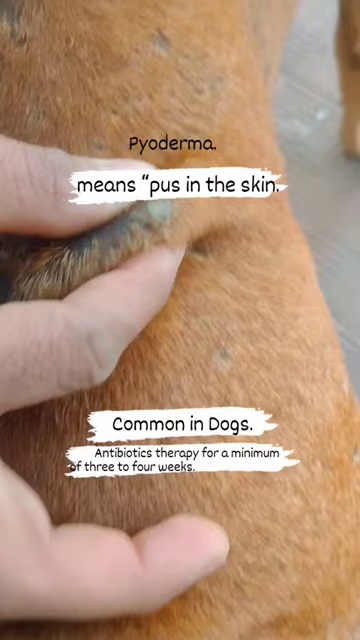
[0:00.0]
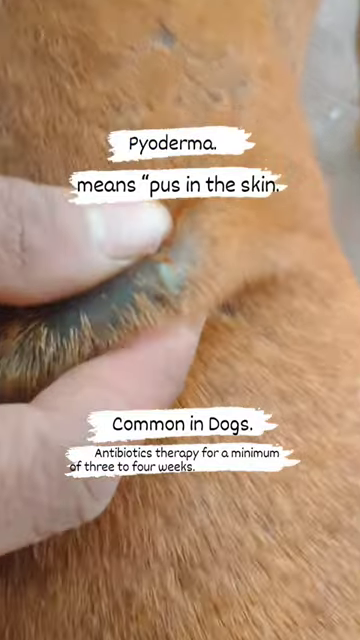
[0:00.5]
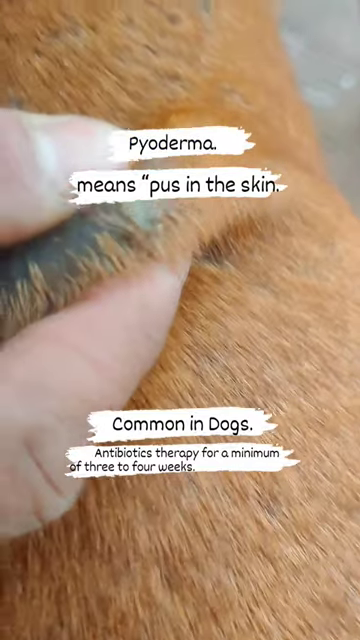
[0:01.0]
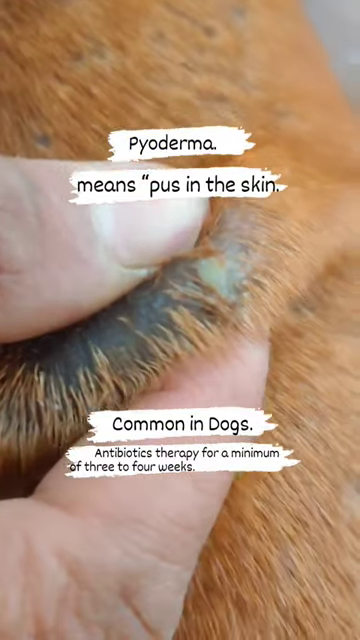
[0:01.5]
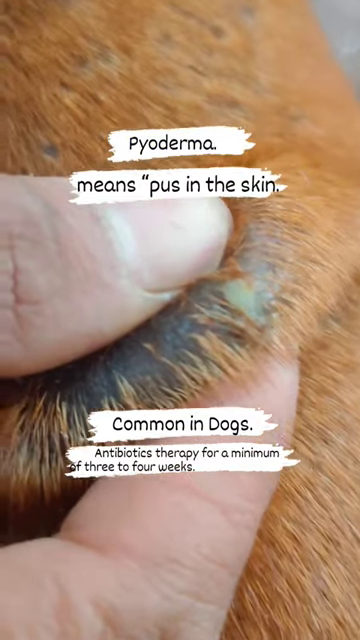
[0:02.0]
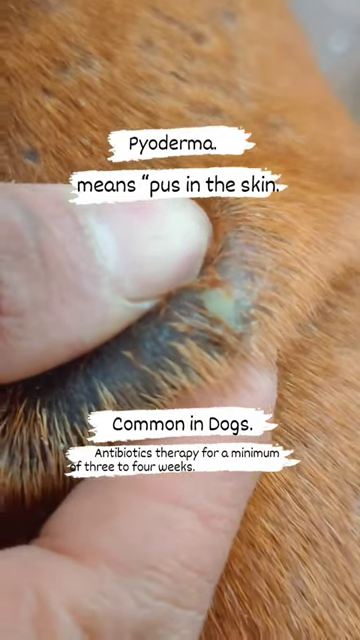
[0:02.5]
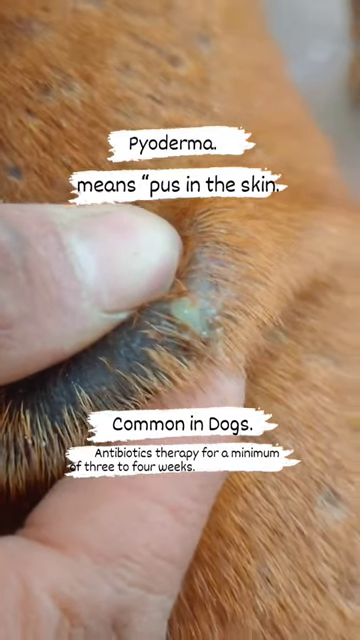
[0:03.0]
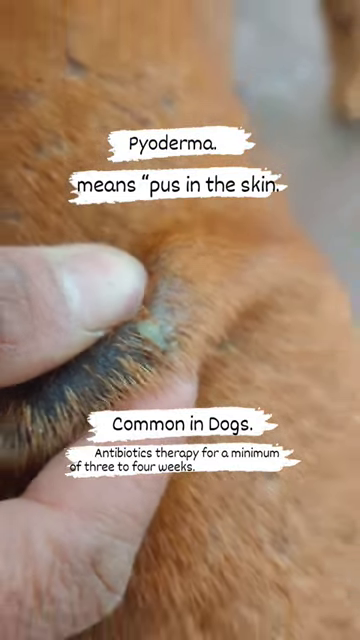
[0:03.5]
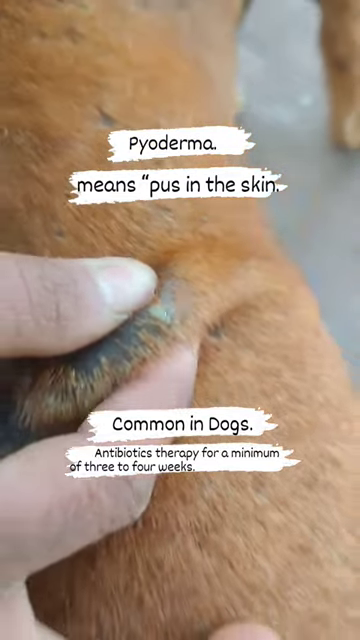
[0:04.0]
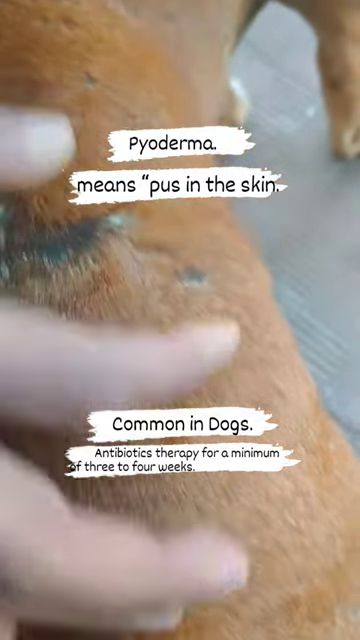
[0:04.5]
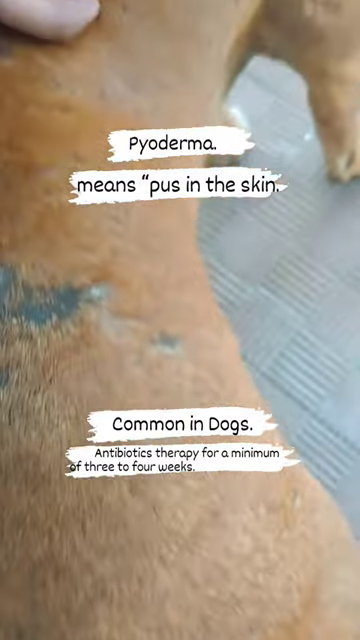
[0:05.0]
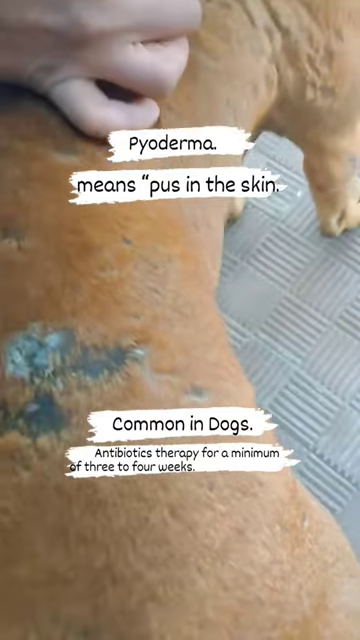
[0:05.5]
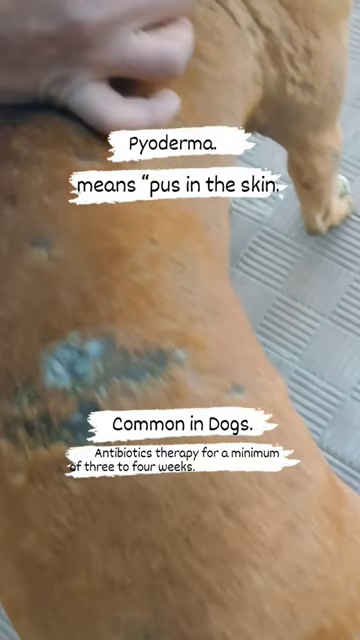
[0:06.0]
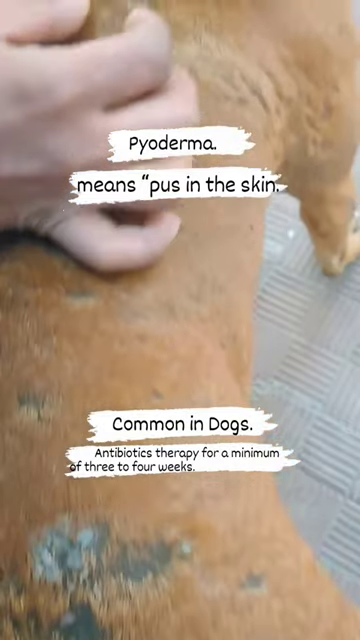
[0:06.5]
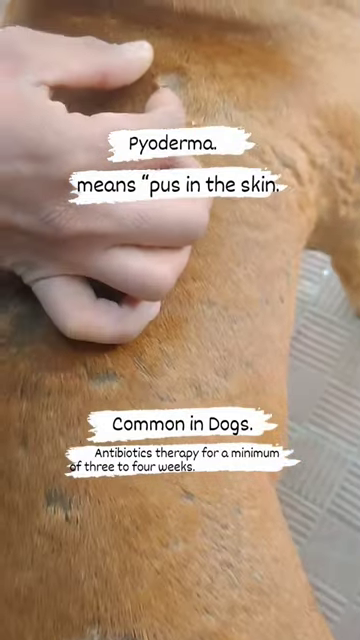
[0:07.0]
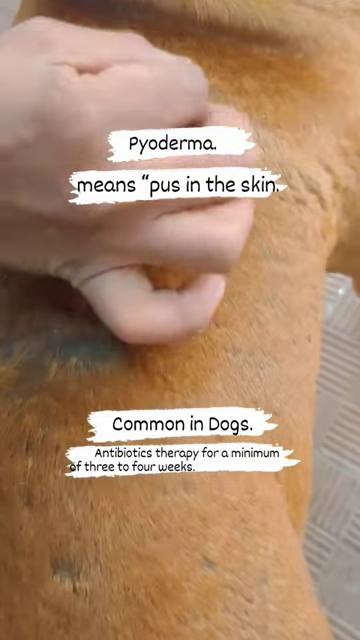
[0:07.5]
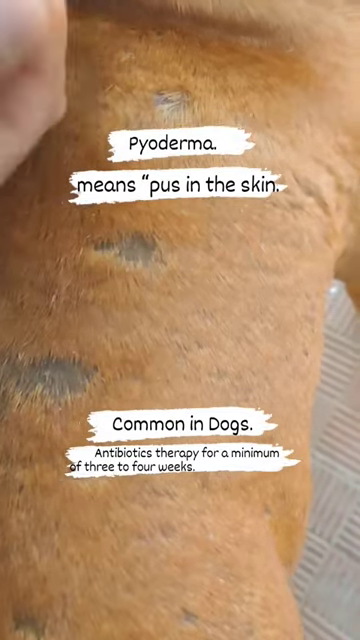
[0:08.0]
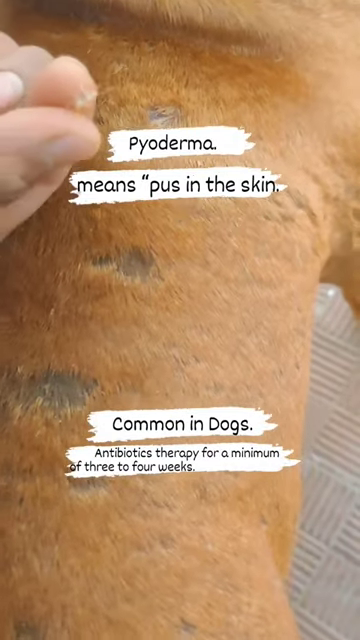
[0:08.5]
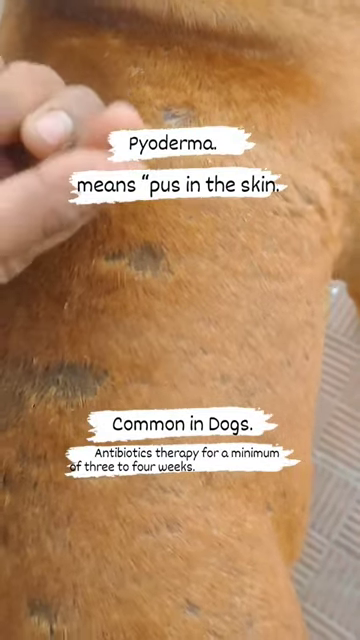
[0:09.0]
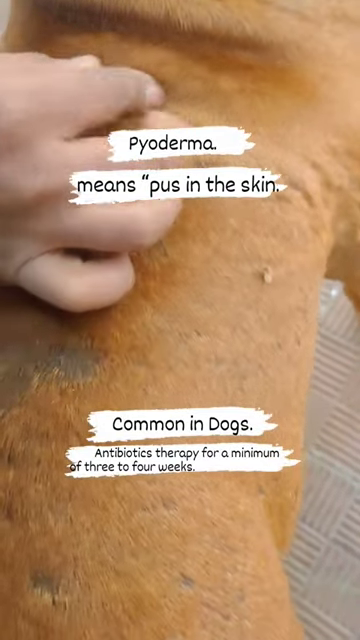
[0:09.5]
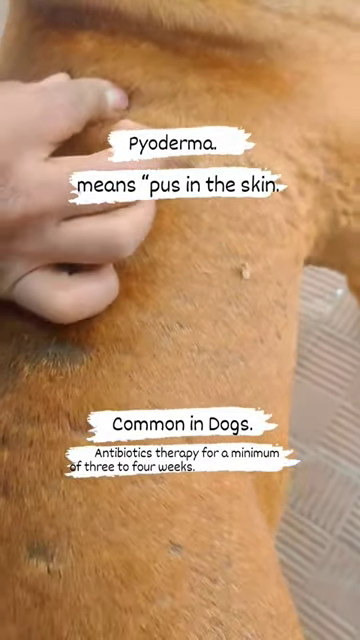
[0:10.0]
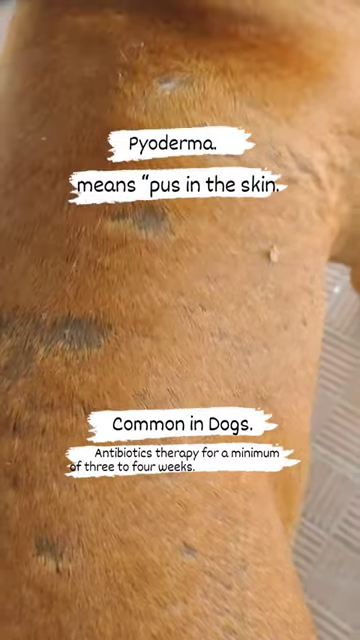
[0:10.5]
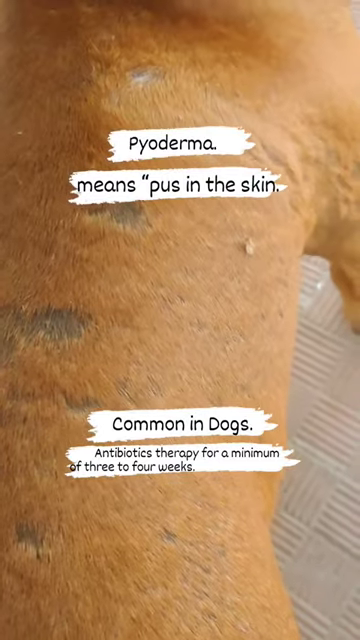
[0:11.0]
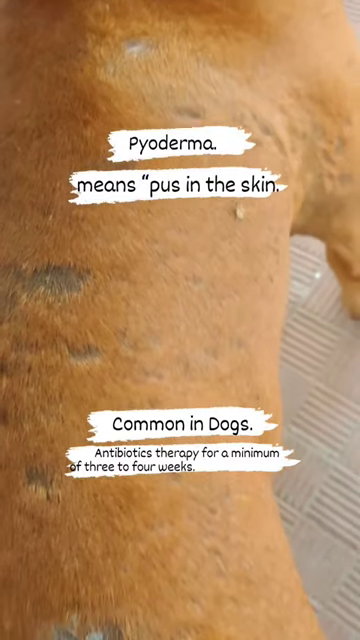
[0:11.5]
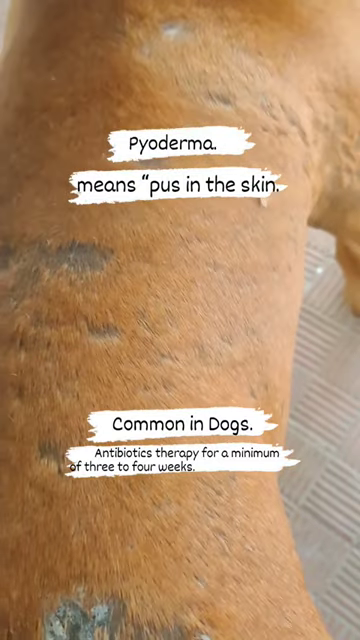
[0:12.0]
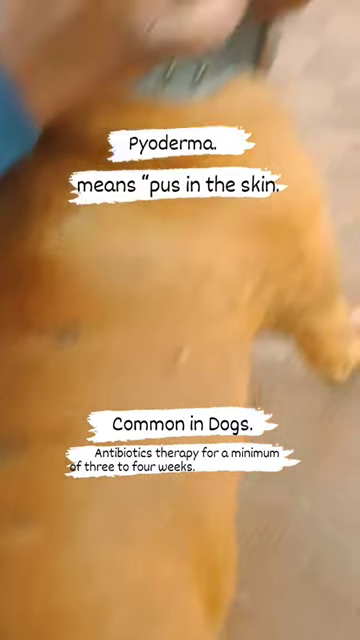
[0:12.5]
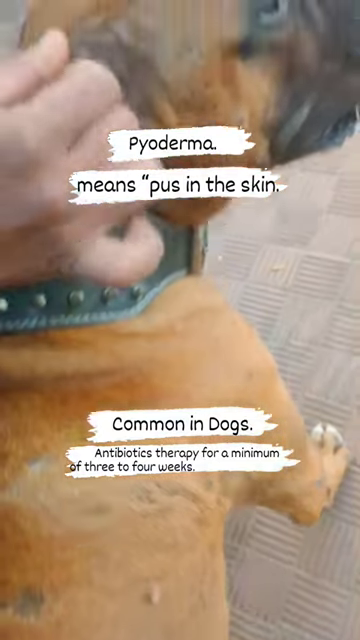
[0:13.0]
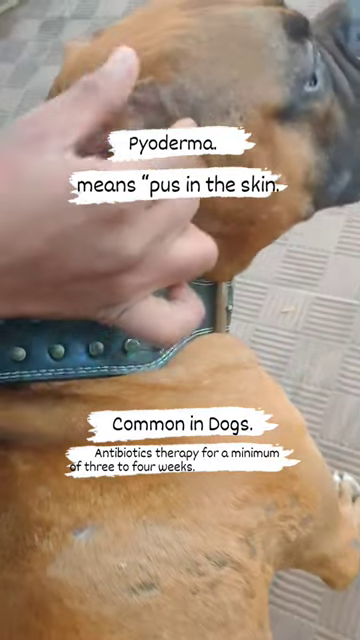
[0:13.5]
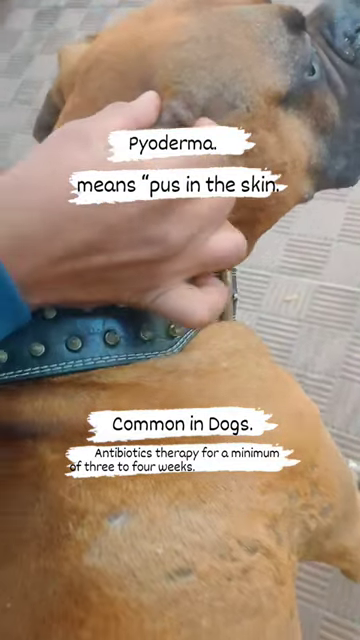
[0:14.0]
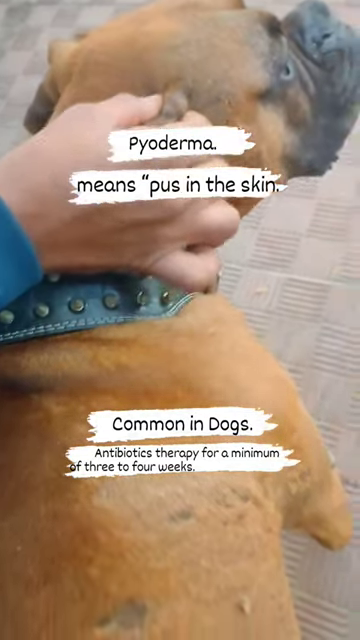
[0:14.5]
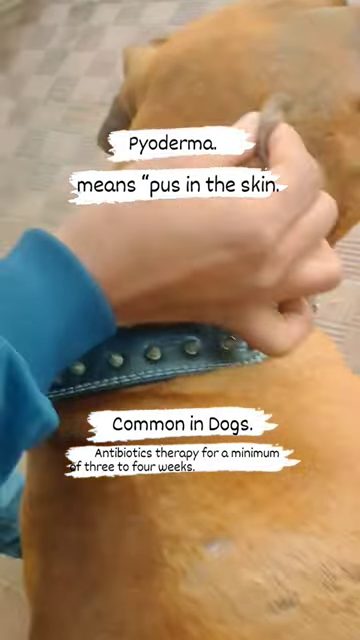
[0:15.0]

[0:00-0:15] The video concerns pyodermas, pus in the skin of dogs, and appears to demonstrate where pyodermas occur on dogs and how to determine whether a dog has them. It apparently indicates that treatment requires antibiotic therapy for a minimum of 3-4 weeks. The video shows where the pus is on the skin of a dog, and the pus is removed and pulled out. The dog looks like it needs to be on antibiotics to resolve the issue. The video looks like it is meant to help dog owners whose dogs may have the same condition.